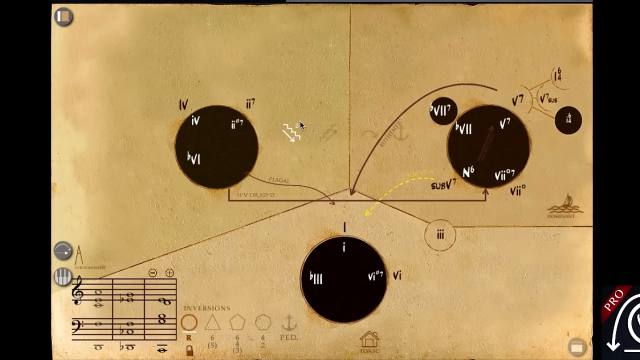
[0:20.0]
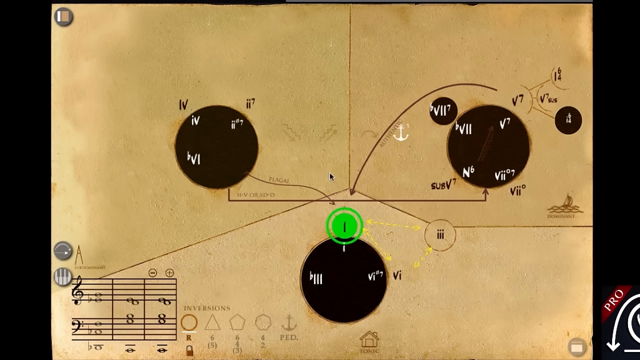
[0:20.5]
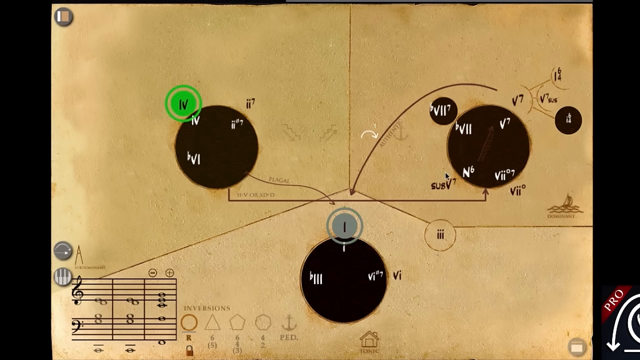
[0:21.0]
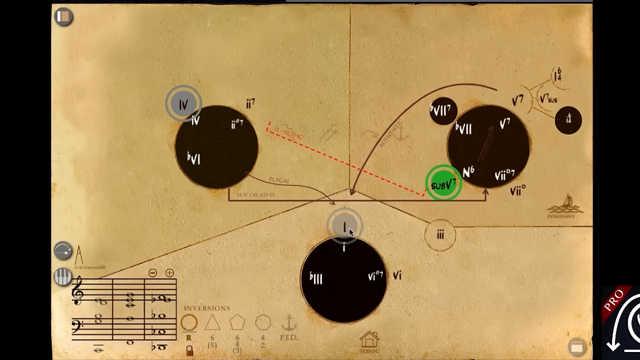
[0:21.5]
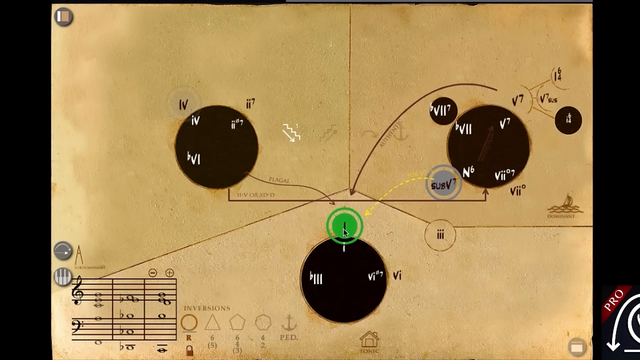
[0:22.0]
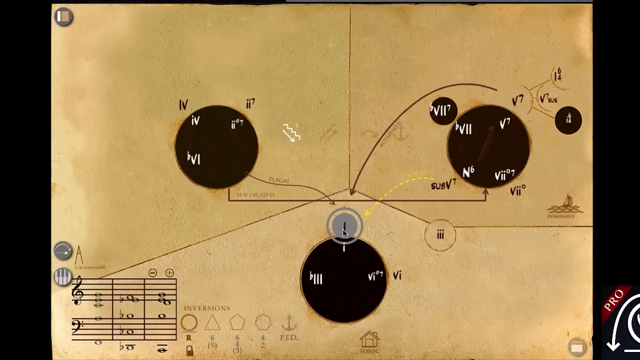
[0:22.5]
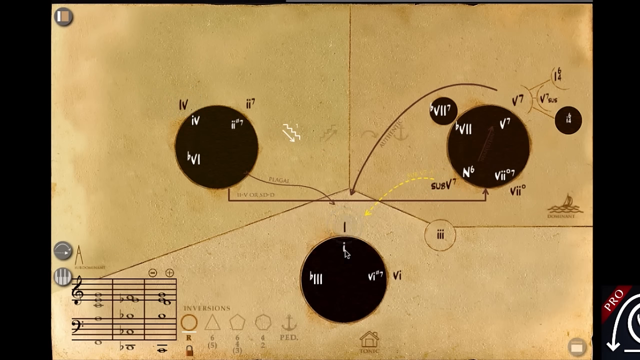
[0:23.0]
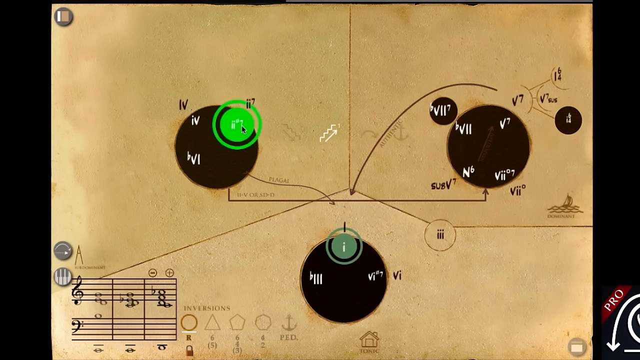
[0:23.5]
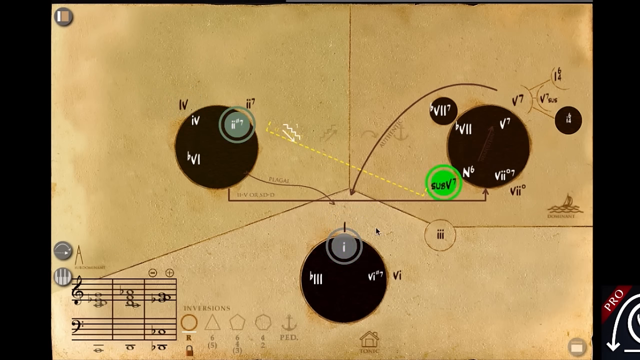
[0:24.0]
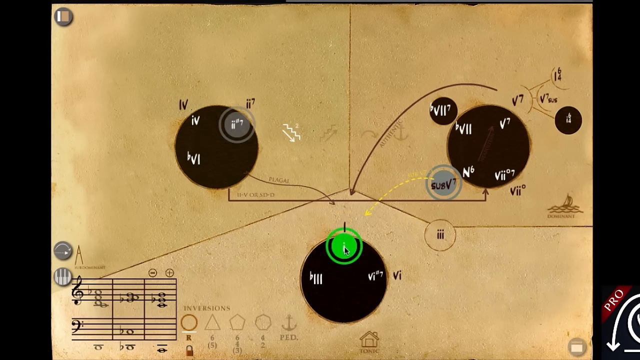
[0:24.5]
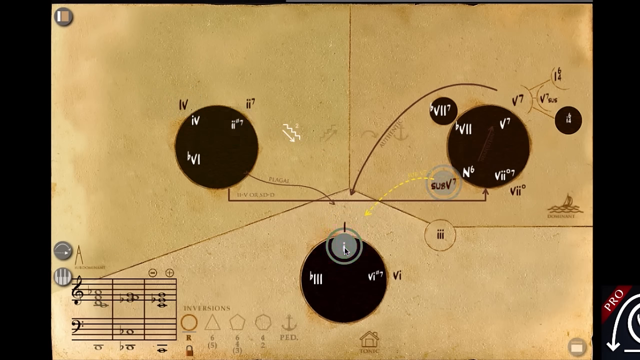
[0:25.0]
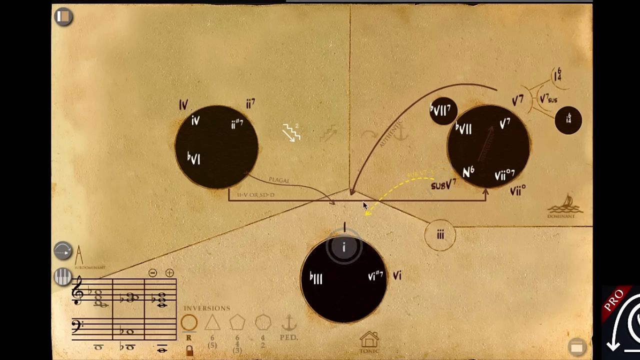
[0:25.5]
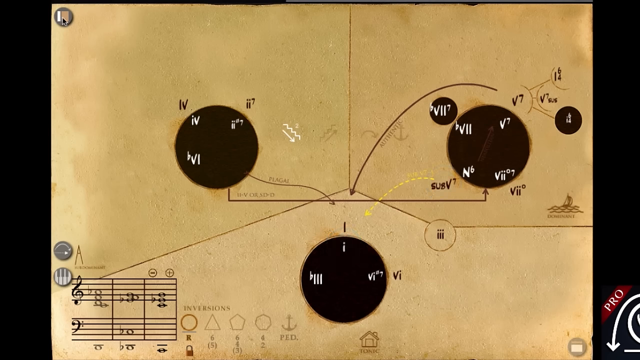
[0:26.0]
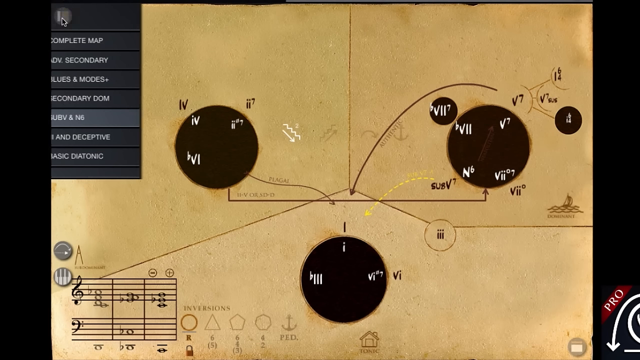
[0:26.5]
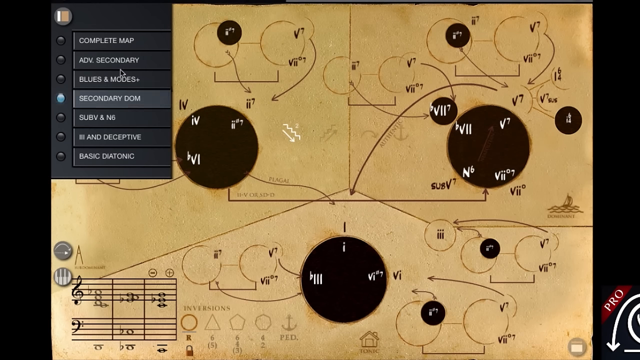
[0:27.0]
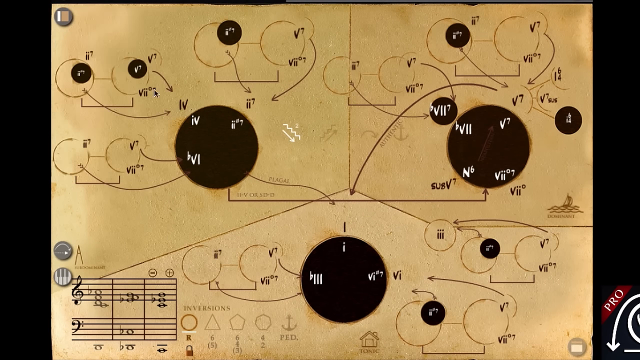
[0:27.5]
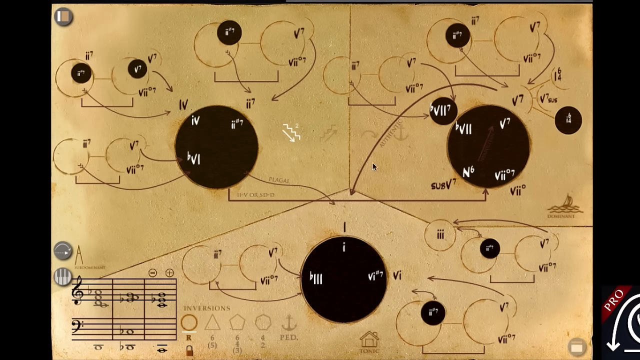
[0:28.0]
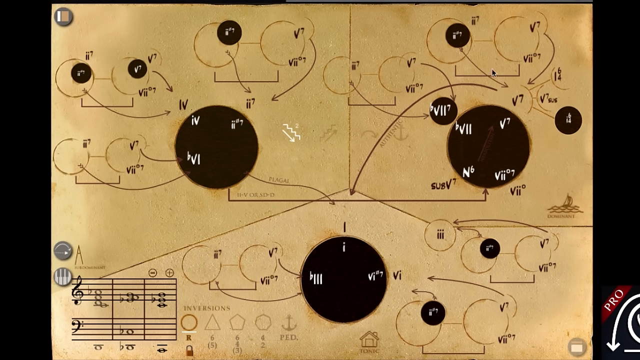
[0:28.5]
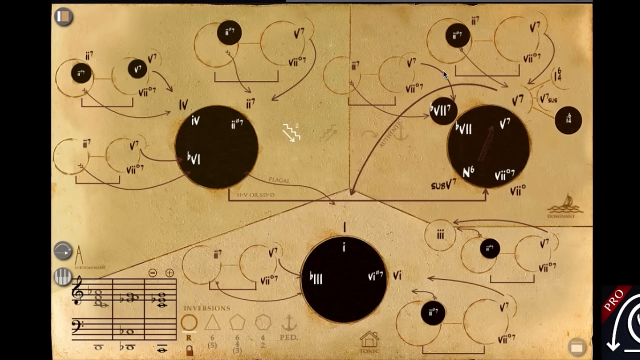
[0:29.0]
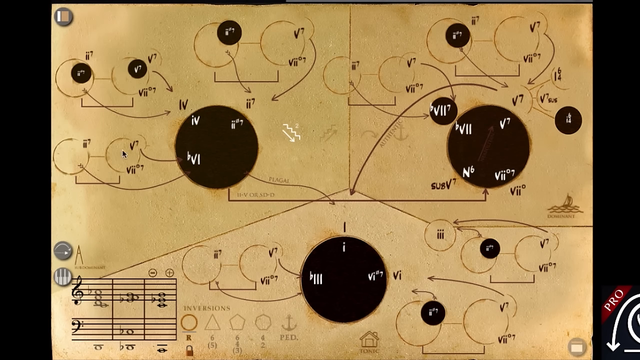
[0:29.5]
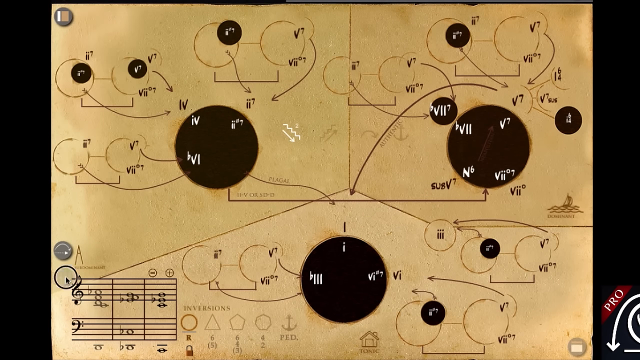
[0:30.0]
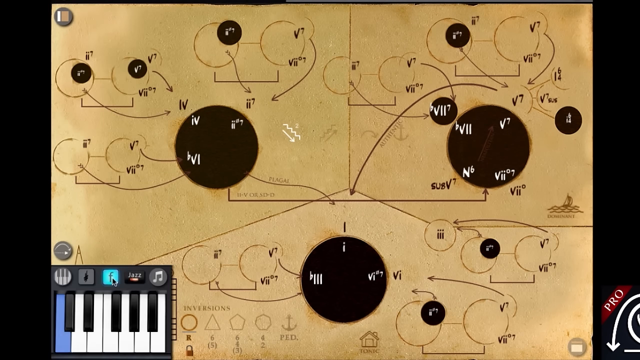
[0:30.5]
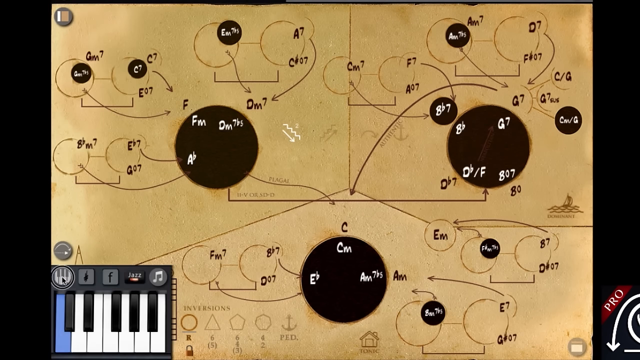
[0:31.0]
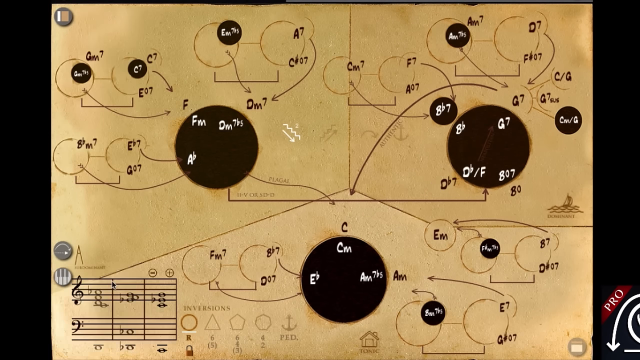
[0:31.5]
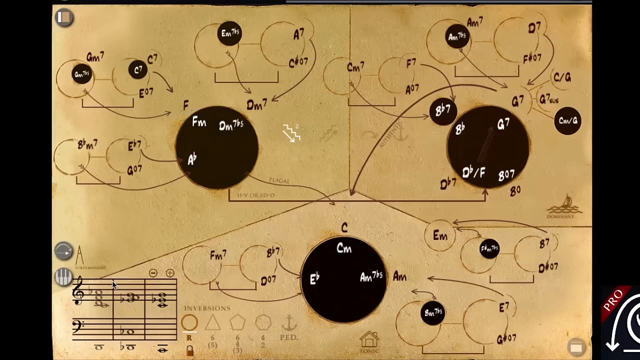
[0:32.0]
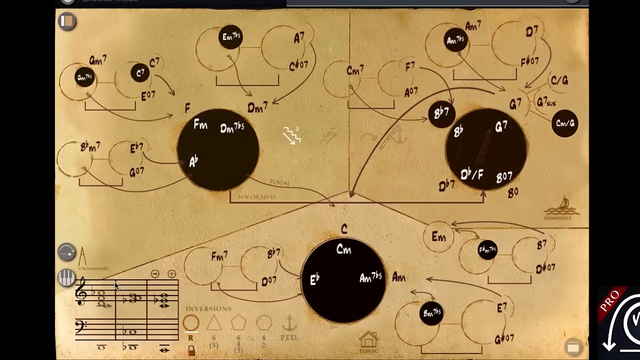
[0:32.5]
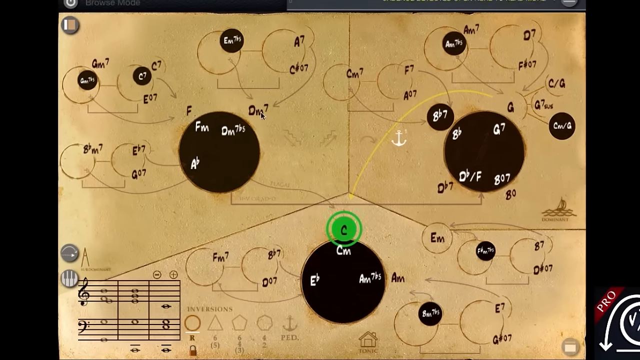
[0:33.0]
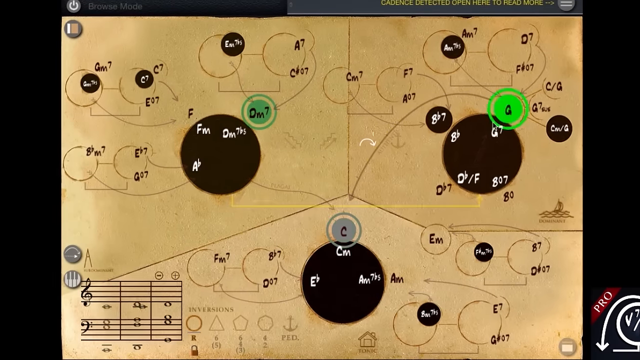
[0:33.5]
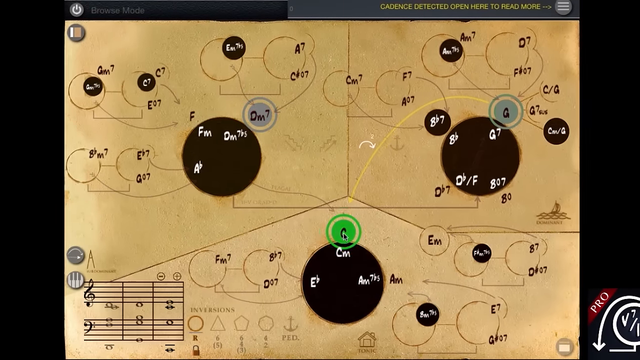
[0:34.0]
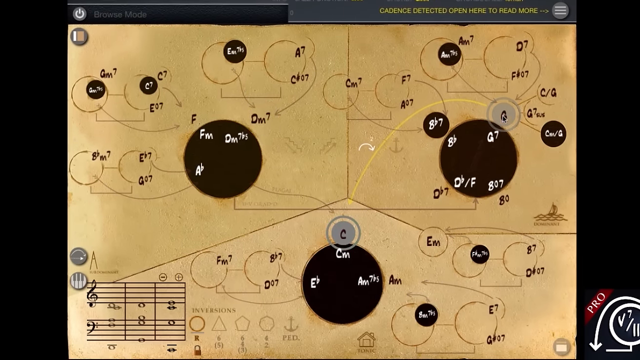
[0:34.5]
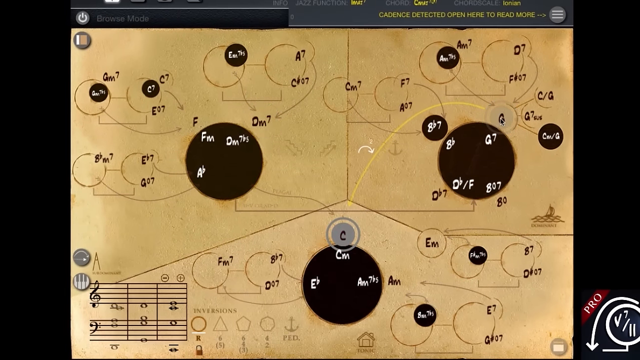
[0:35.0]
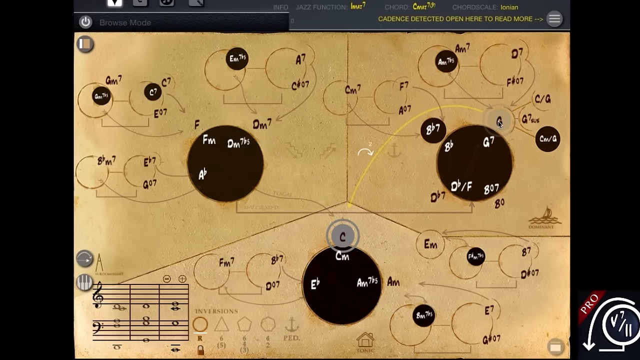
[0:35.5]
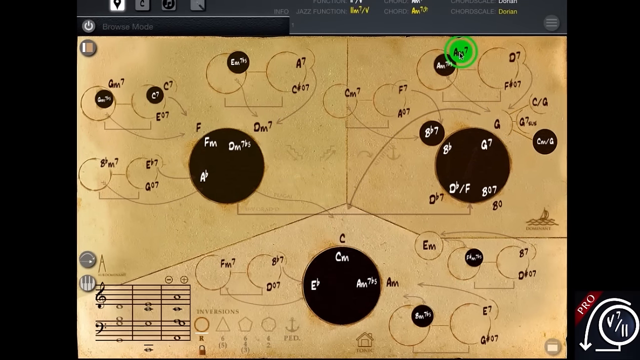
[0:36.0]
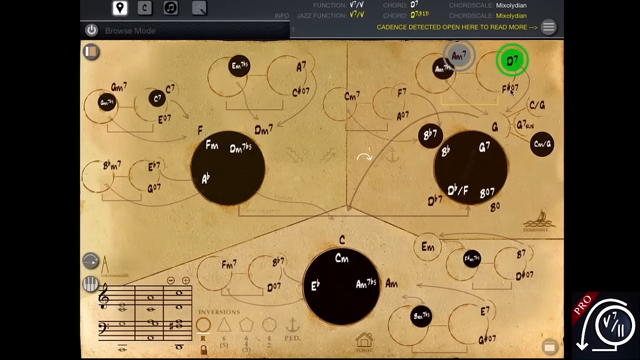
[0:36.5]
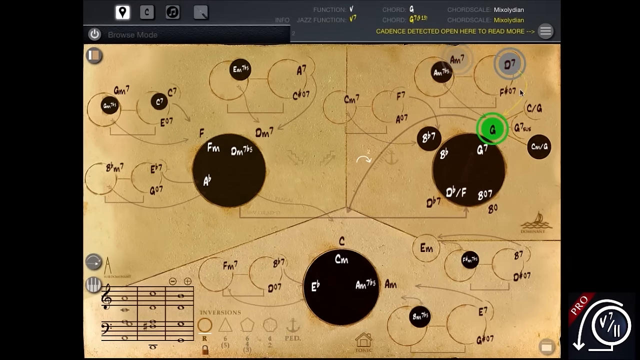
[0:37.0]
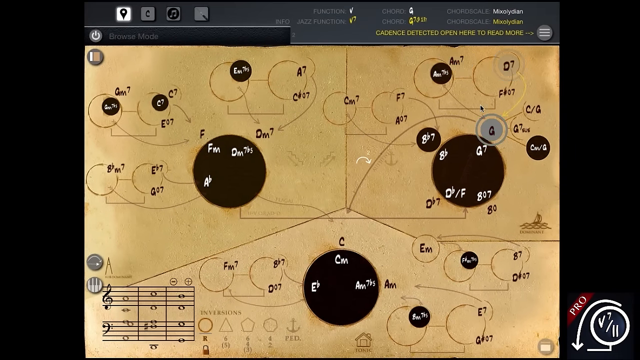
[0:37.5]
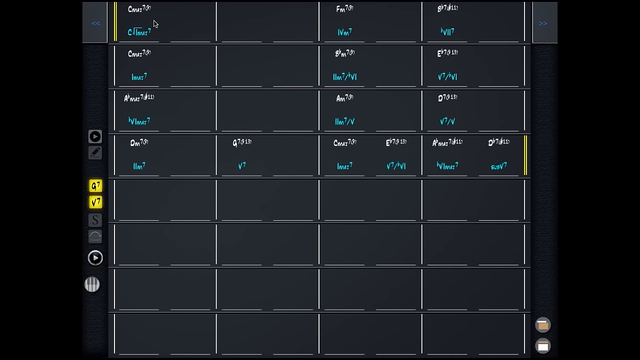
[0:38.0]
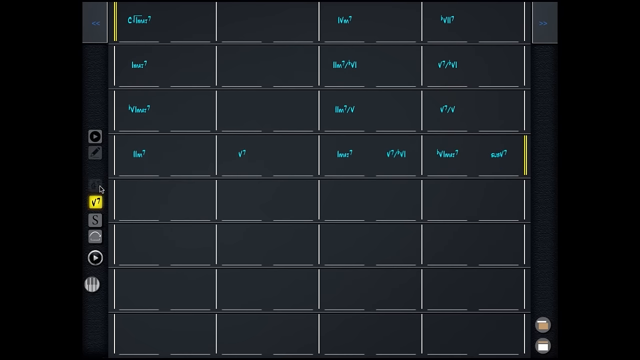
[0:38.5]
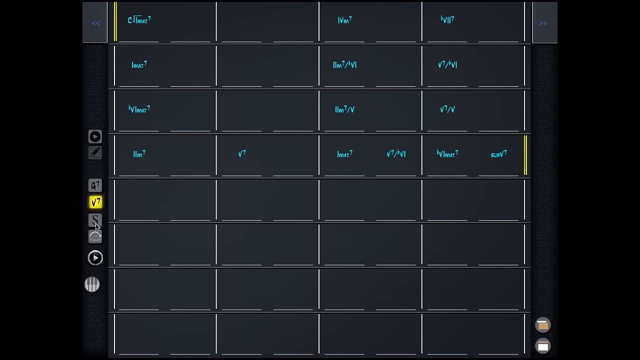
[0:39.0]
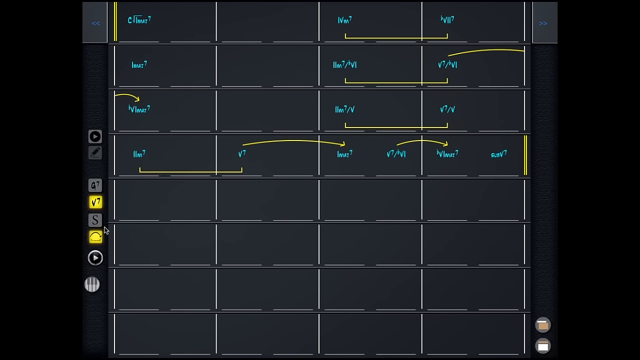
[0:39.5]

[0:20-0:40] The video continues showing the three circles on the cube-like shape. The mouse darts between the circles and highlights different circles surrounding the larger circles. When the mouse highlights a circle, it briefly becomes a brighter green, which gradually fades out. Sometimes the circles vanish; other times they stay with a dark background. The mouse brings the menu back up on the left side, along with many more hollow circles around the image. These circles have black outlines and no fill color, and arrows lead from them to various places, usually toward the larger circles. The sidebar is removed from view, but these circles remain. The mouse goes to the bottom left and selects one of the icons there, bringing up a small section of notes next to the button. The camera zooms out slowly as the mouse continues to dart around the screen highlighting the circles.